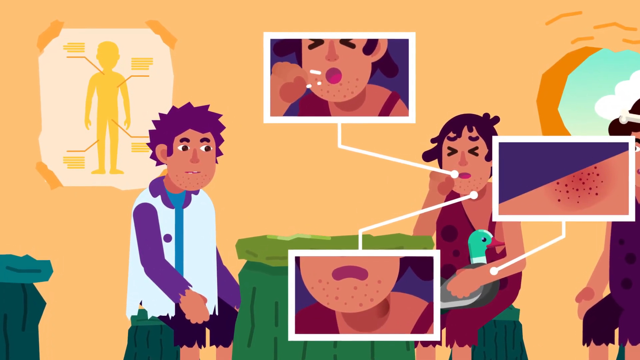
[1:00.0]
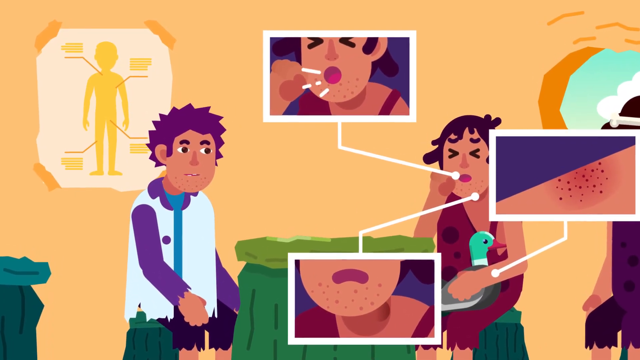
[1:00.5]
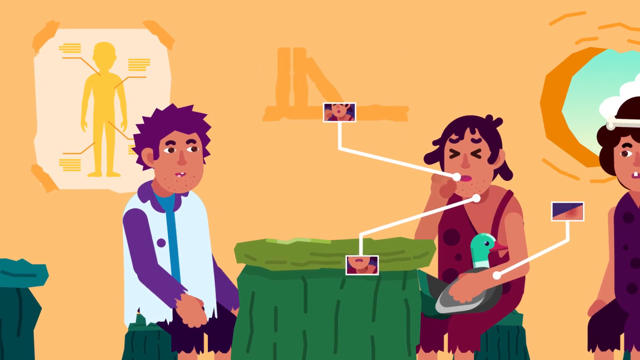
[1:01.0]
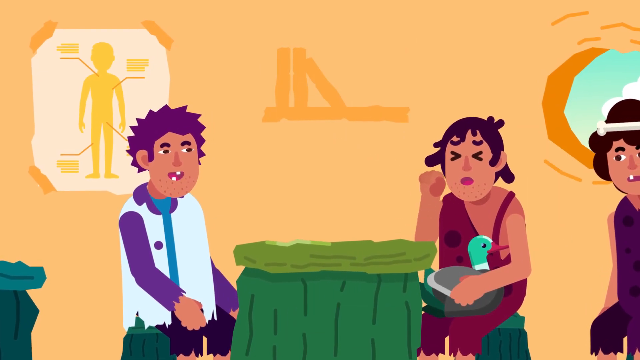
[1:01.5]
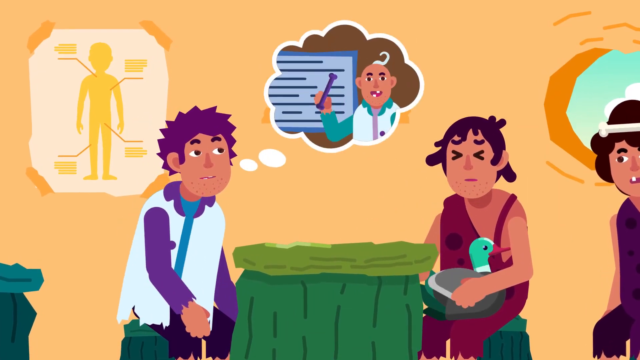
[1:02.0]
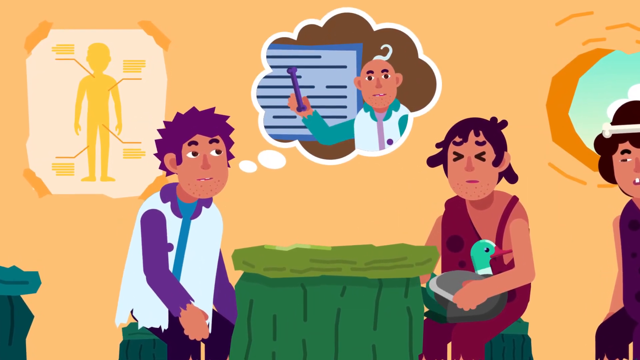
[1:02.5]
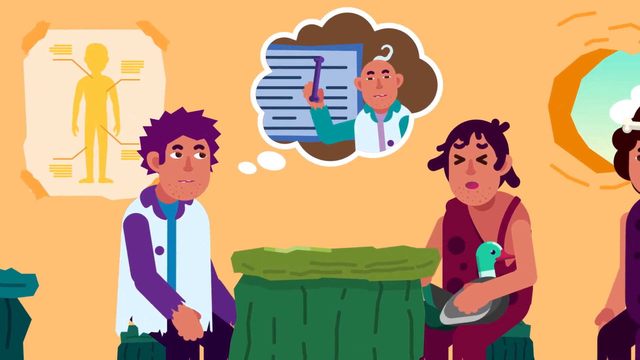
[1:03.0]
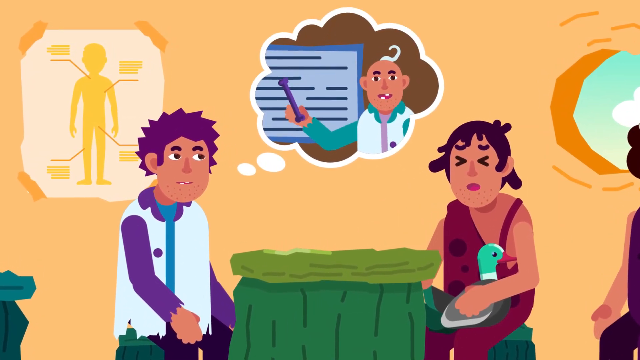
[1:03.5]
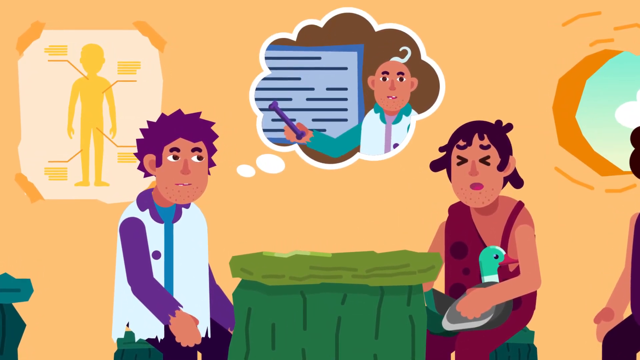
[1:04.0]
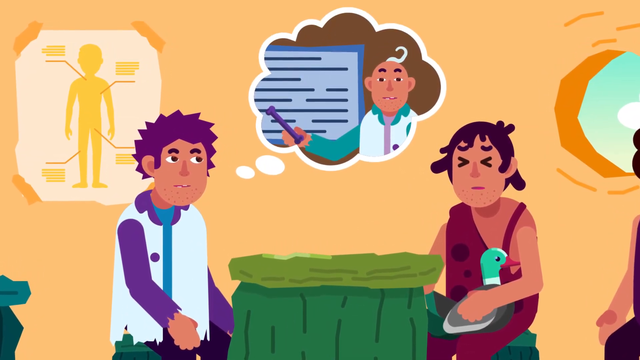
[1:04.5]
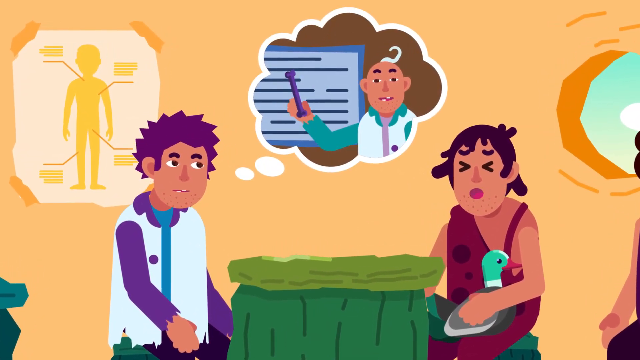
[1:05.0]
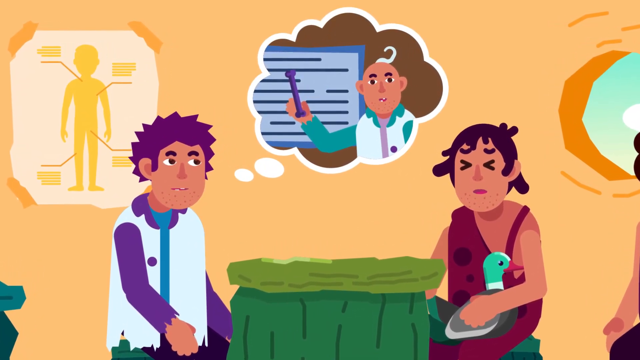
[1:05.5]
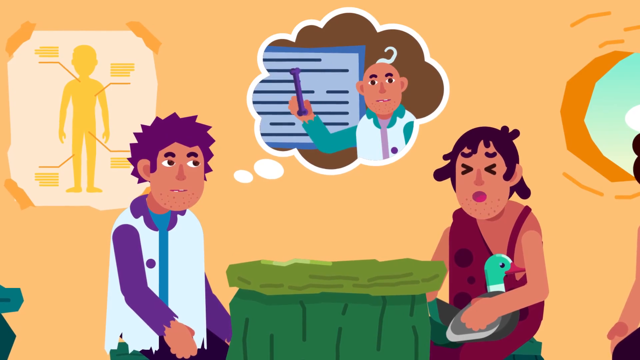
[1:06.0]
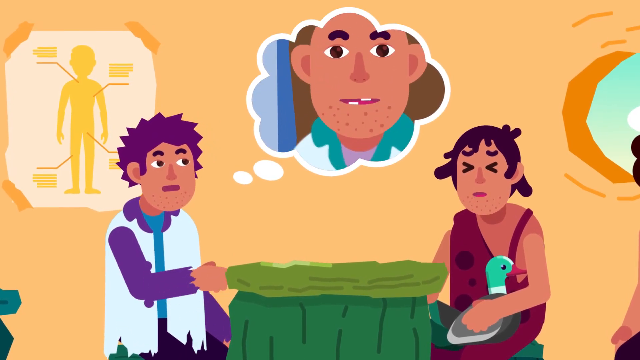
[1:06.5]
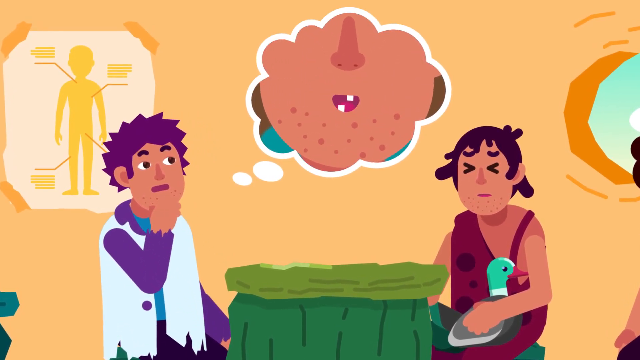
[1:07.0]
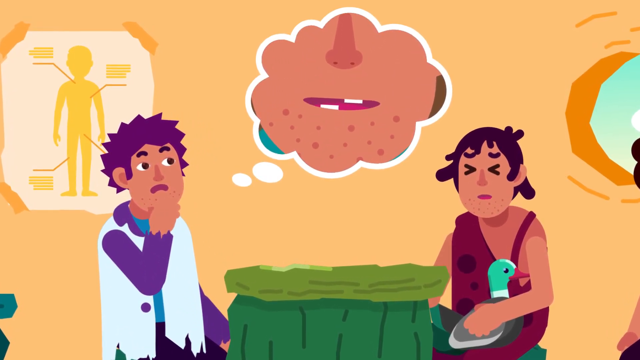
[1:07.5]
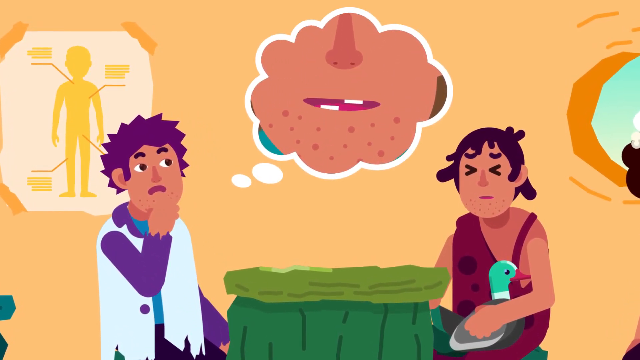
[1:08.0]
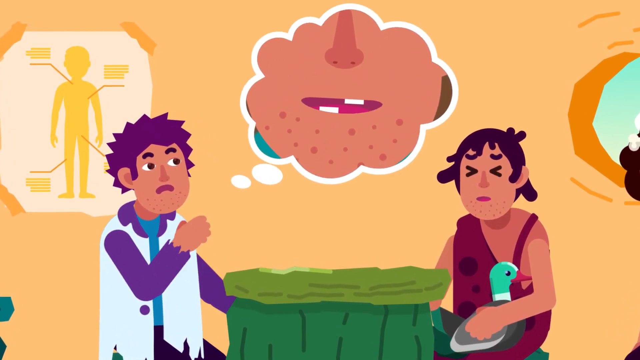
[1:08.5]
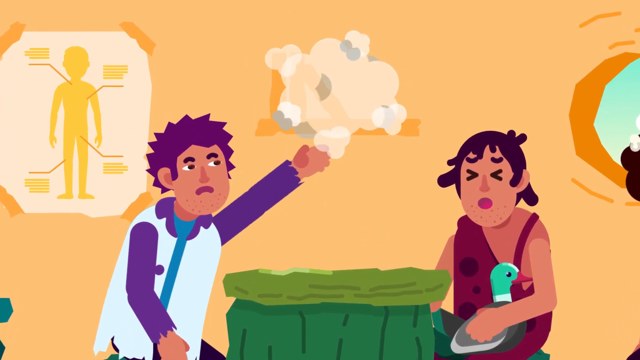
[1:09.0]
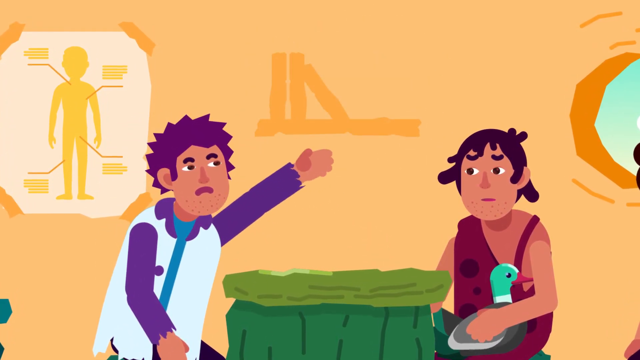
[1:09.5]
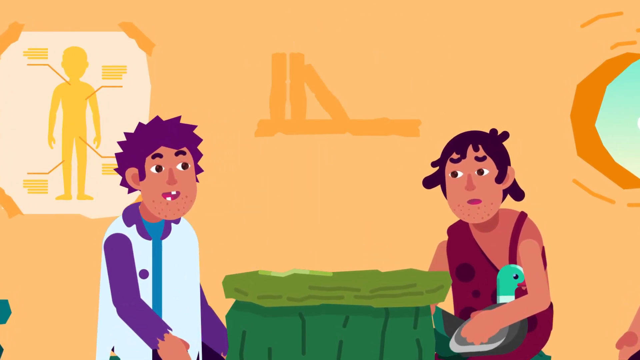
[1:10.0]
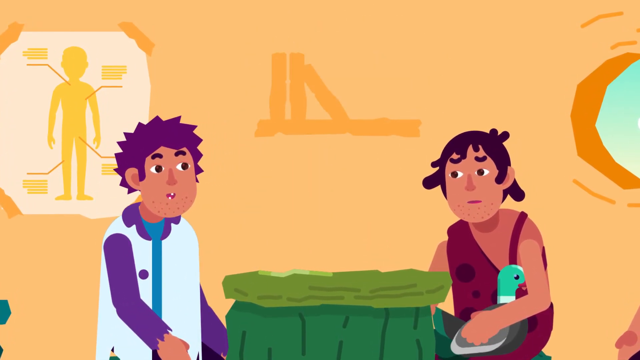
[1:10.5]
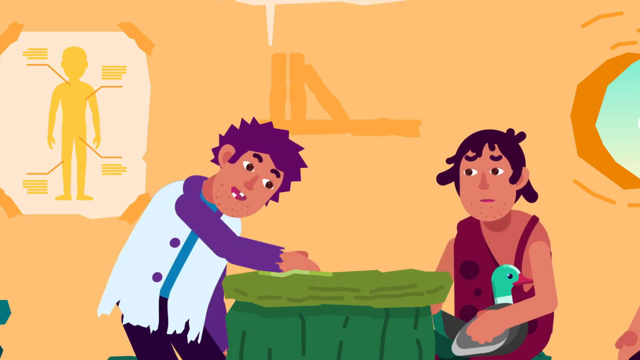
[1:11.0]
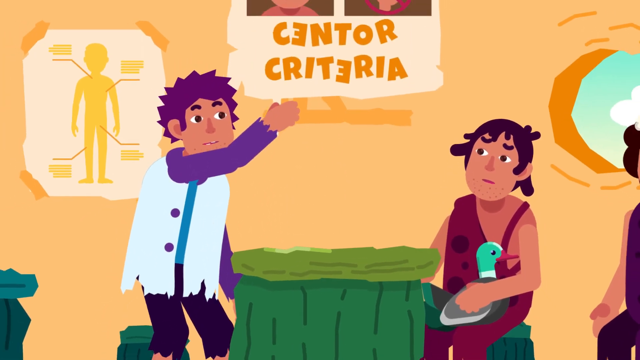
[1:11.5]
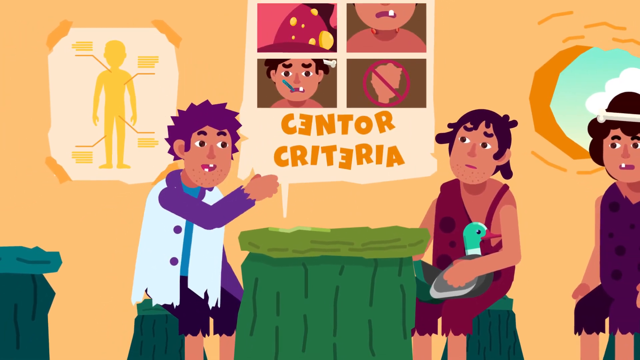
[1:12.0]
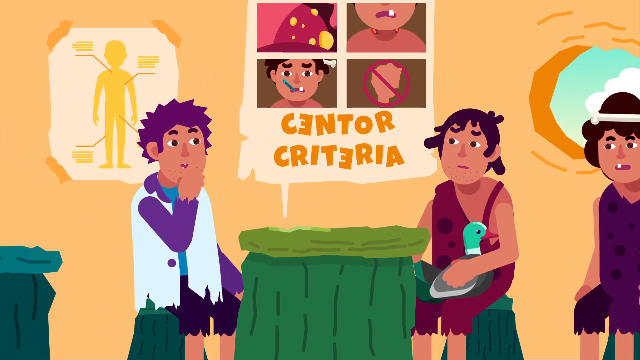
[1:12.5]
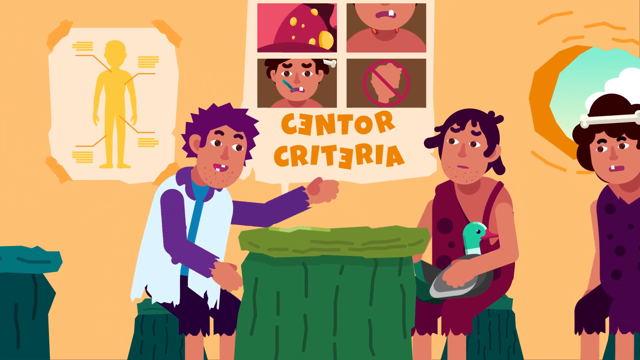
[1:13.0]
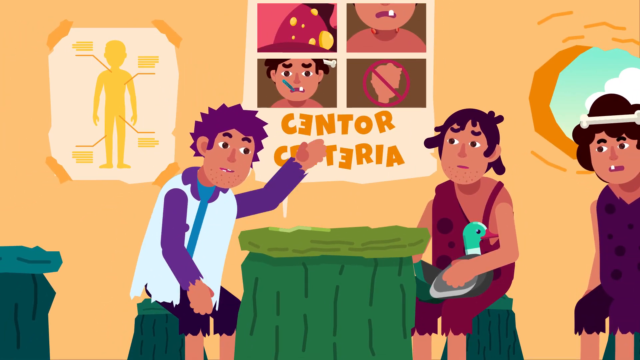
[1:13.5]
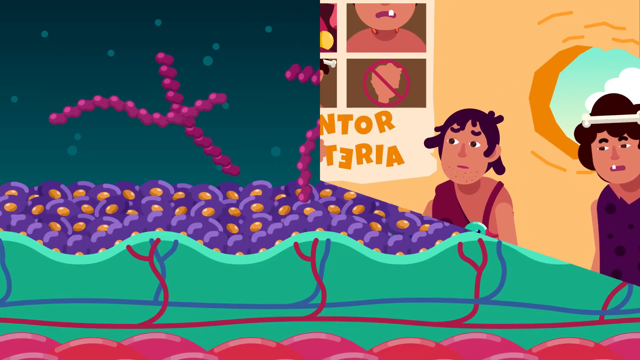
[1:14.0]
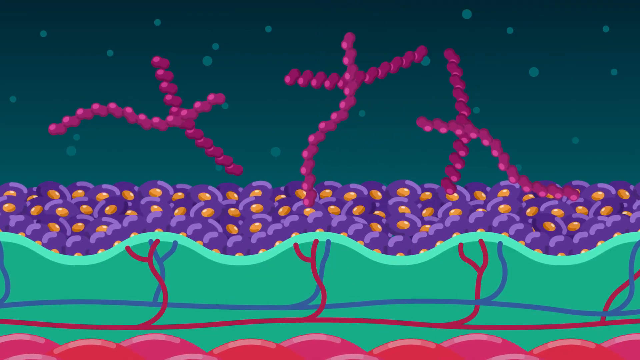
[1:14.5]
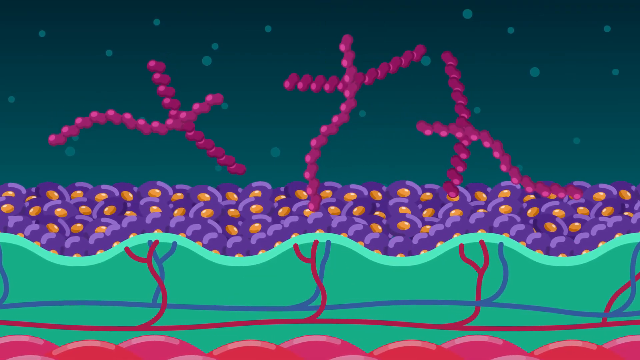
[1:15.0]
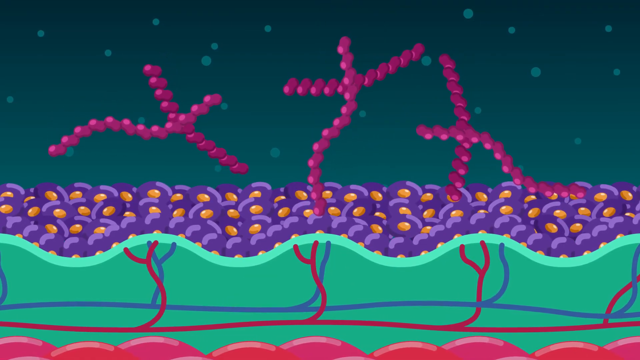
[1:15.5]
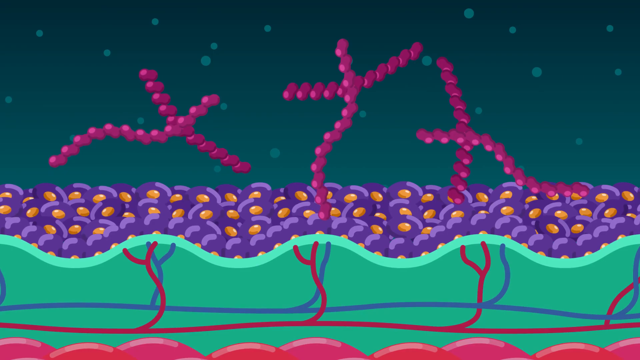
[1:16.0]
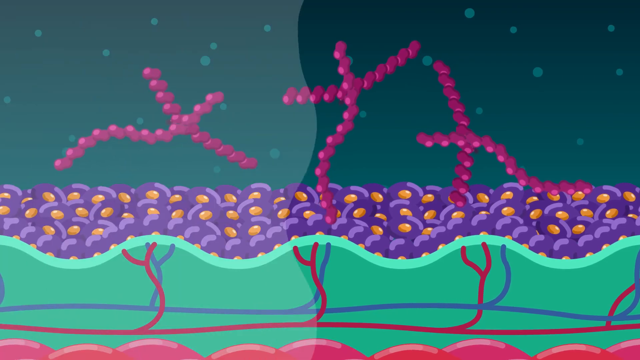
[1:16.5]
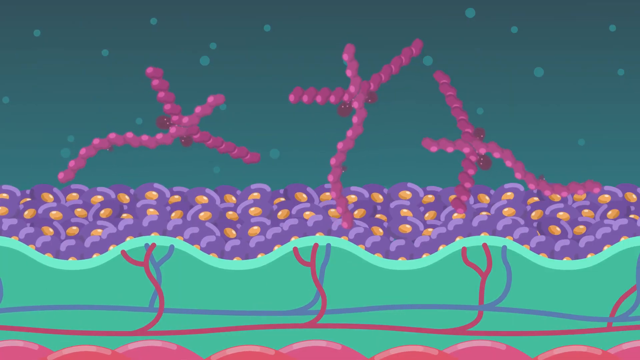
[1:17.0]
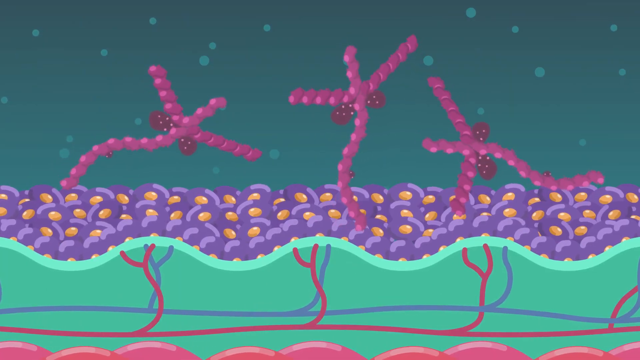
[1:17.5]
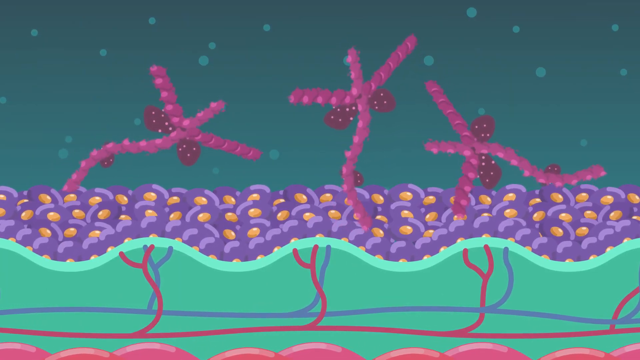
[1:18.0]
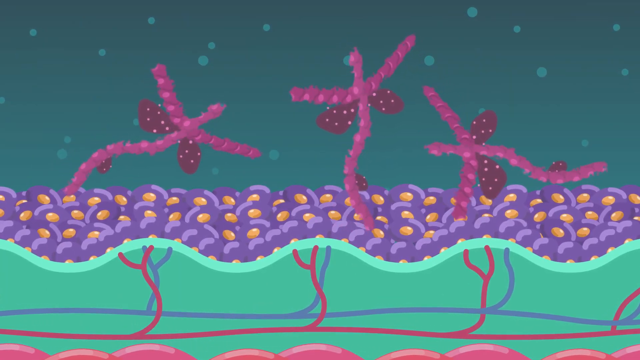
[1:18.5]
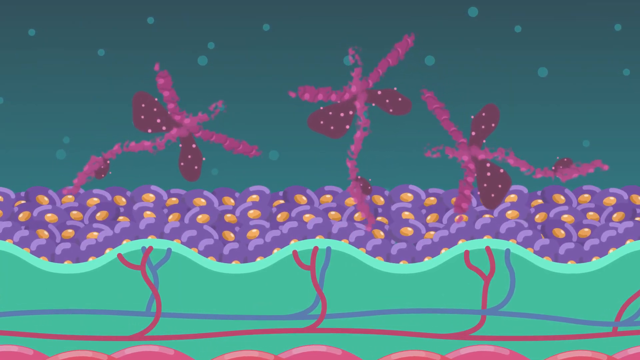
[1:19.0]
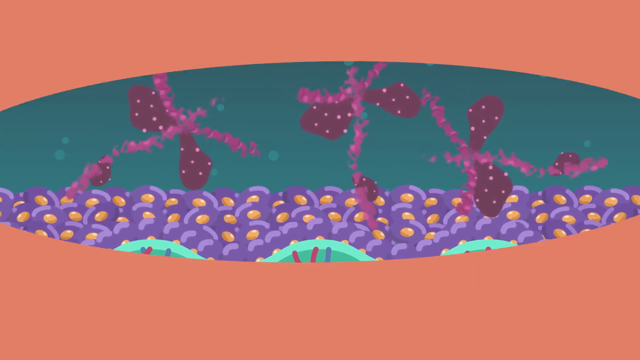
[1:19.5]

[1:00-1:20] The symptoms continue to come off the coughing person holding the duck. A thought bubble comes off the person on the other side of the table, showing another person who seems to be teaching about something. The thinking person looks to be nodding while that person talks, then looks really scared; after looking scared or realizing something, they wave their hand in the air to make the thought bubble go away. They then pull down a slide that says "Center Criteria," with the E's written backwards and "Center" spelled with an O, possibly to suggest caveman speech. The slide displays four symptoms with images above the text. An animation then shows the virus growing in the body. The person holding the duck begins to look very scared.